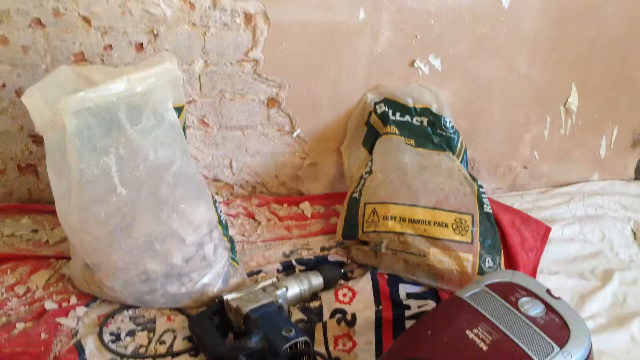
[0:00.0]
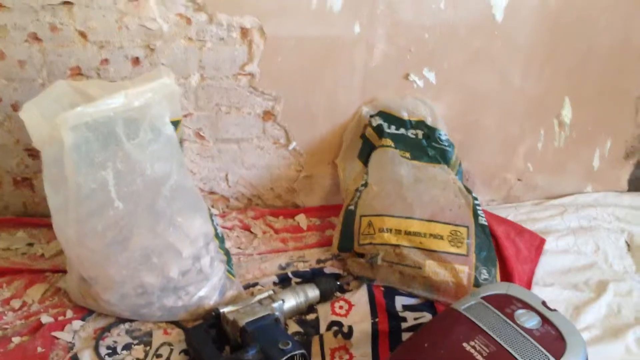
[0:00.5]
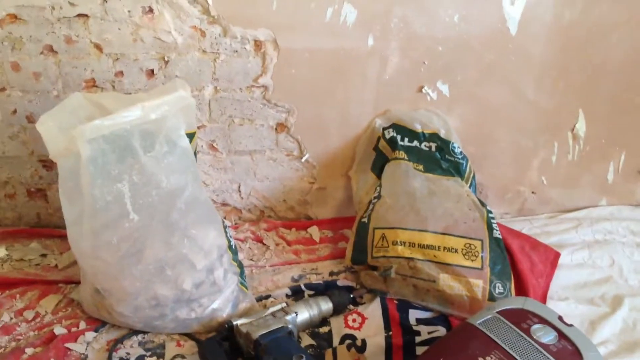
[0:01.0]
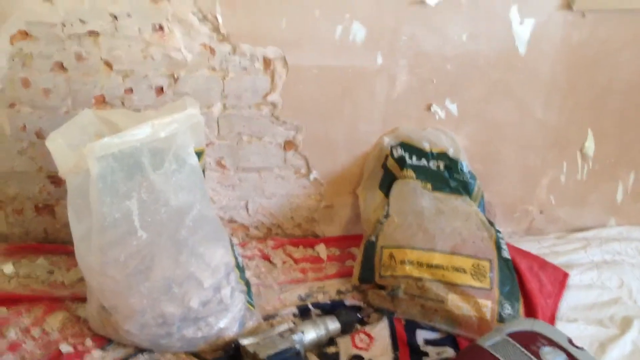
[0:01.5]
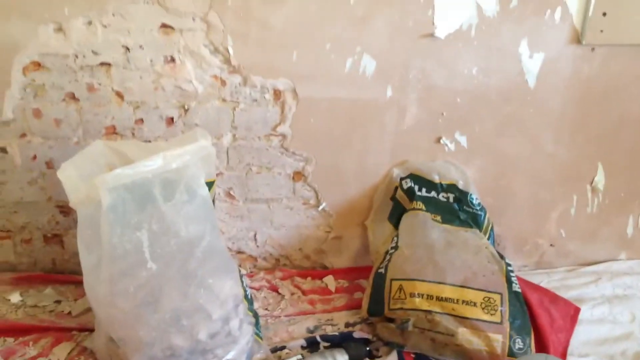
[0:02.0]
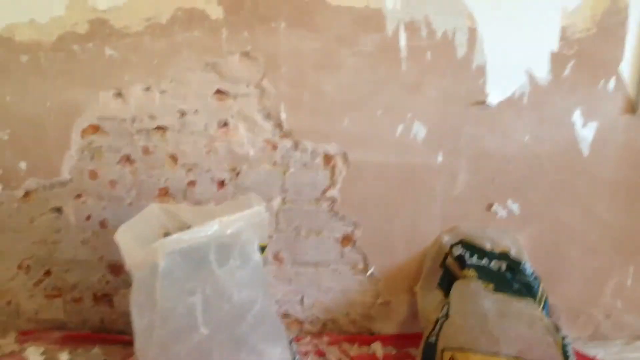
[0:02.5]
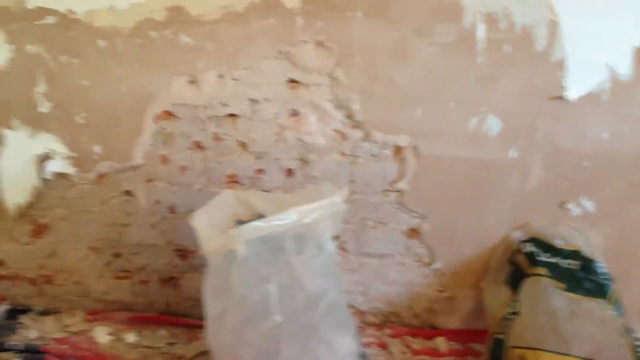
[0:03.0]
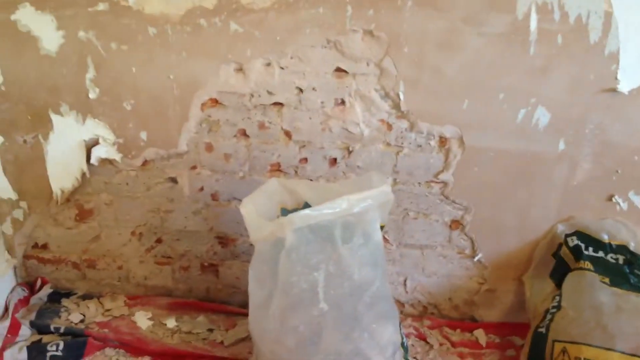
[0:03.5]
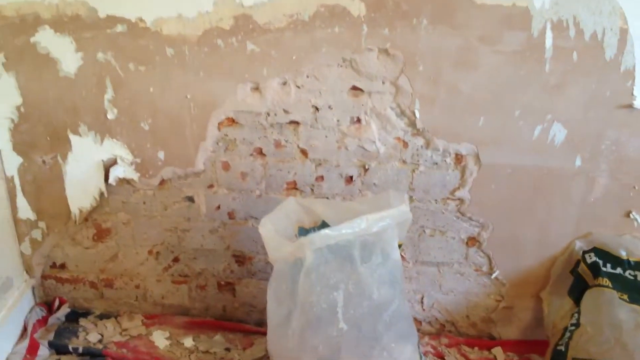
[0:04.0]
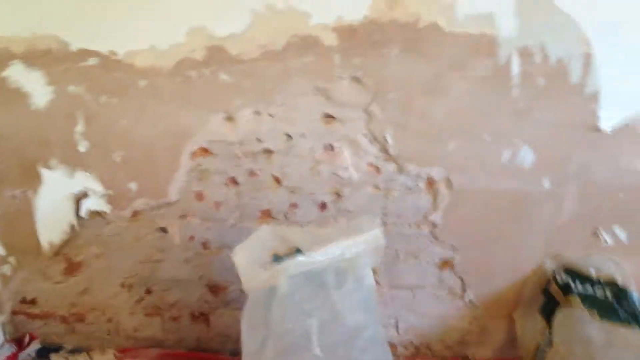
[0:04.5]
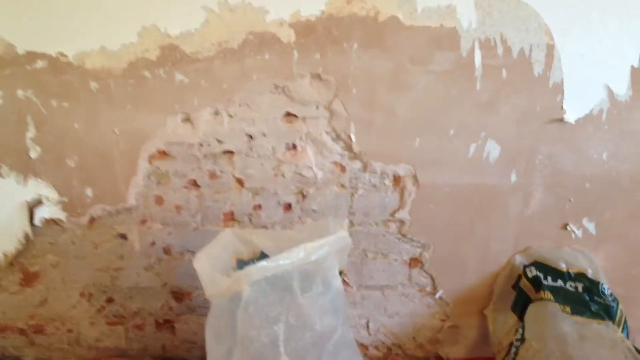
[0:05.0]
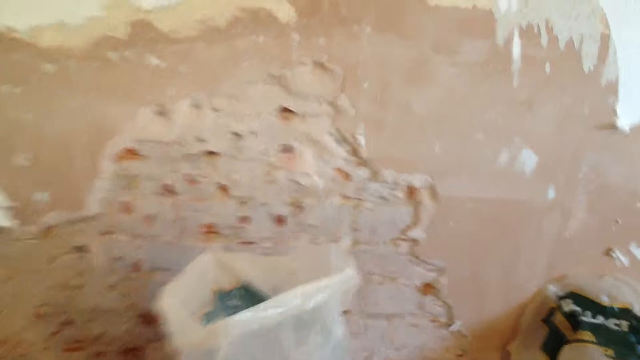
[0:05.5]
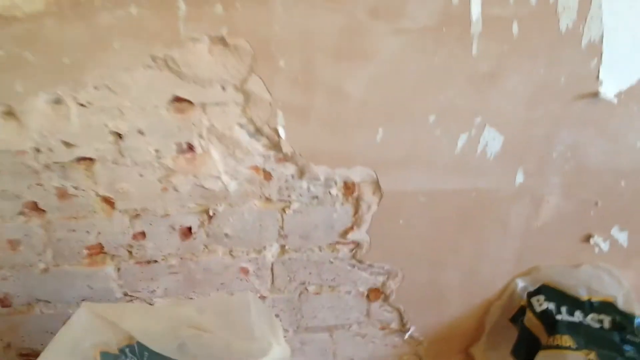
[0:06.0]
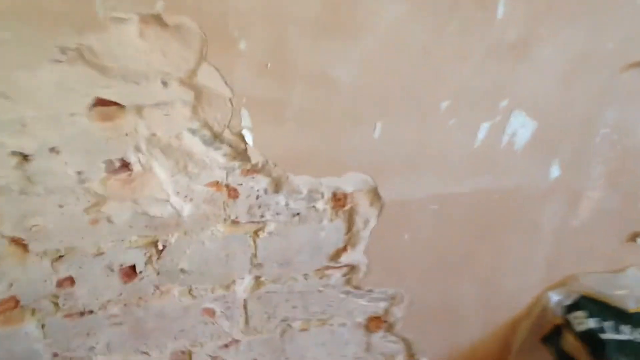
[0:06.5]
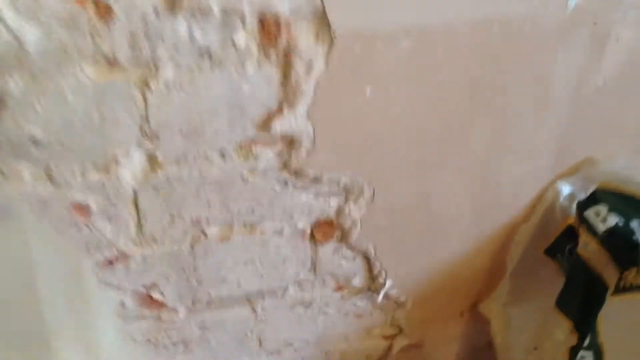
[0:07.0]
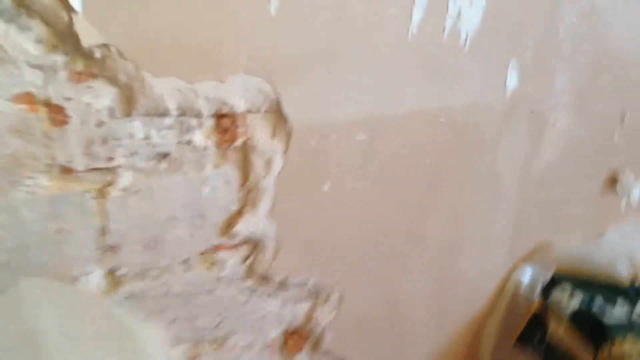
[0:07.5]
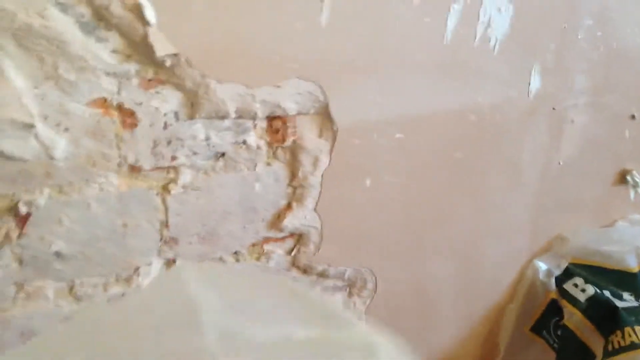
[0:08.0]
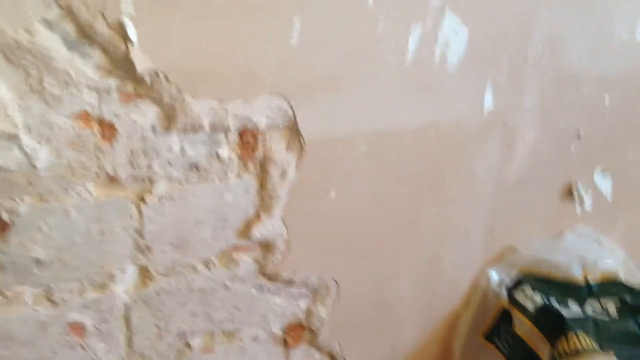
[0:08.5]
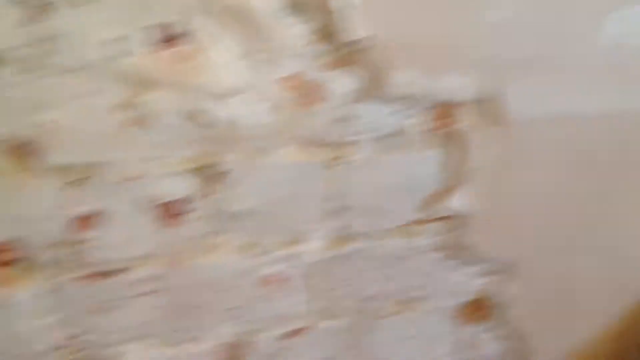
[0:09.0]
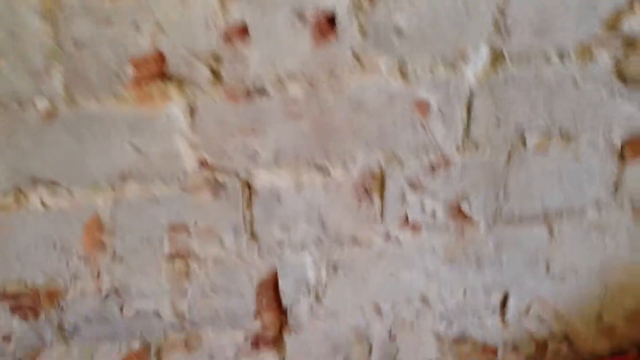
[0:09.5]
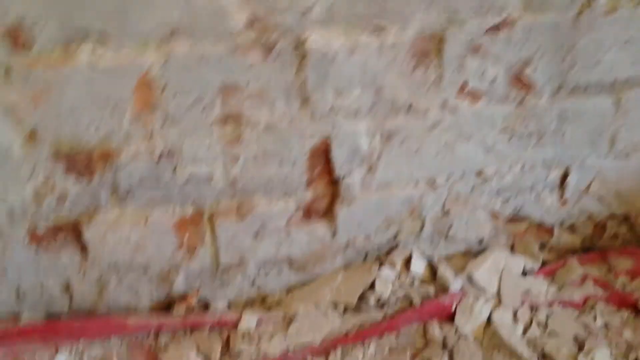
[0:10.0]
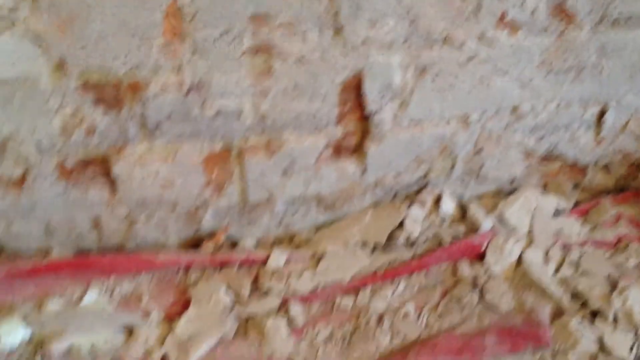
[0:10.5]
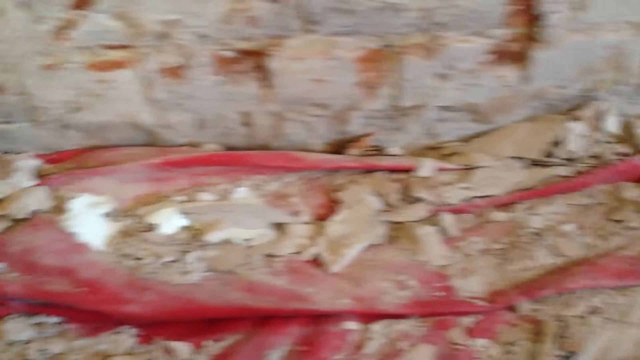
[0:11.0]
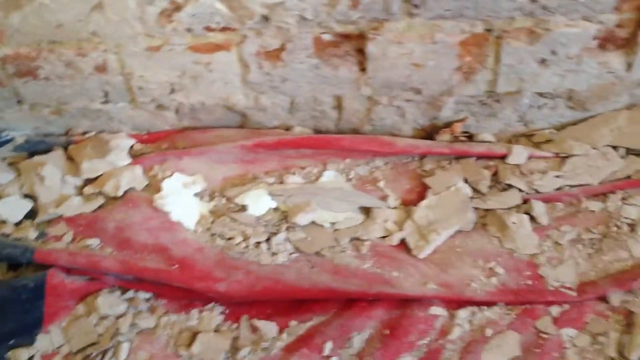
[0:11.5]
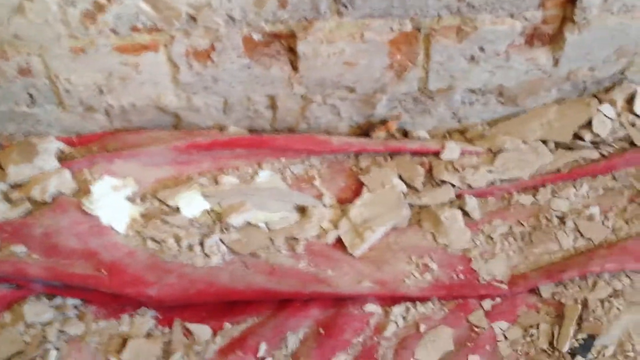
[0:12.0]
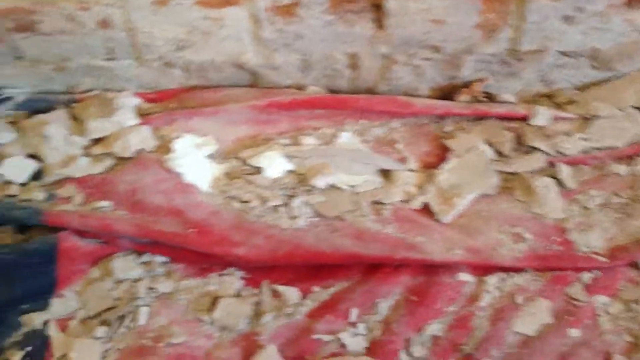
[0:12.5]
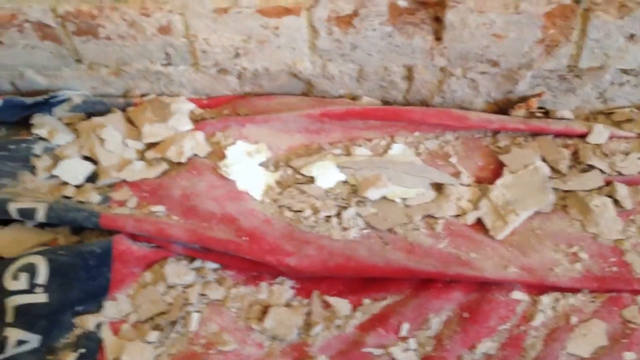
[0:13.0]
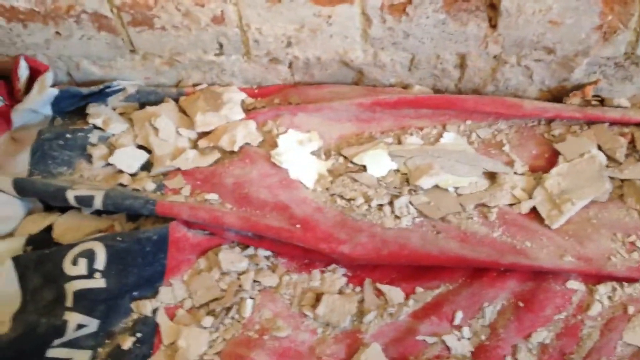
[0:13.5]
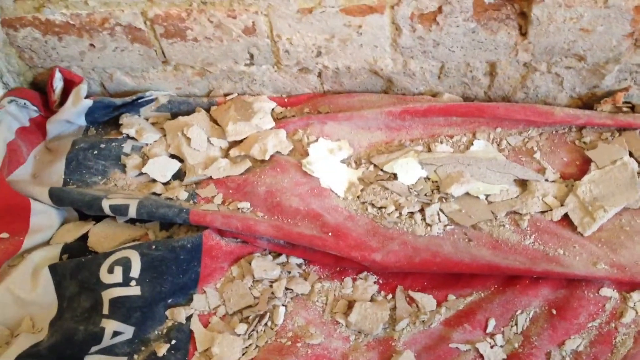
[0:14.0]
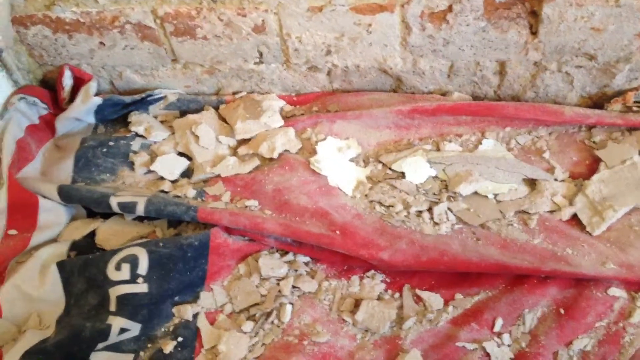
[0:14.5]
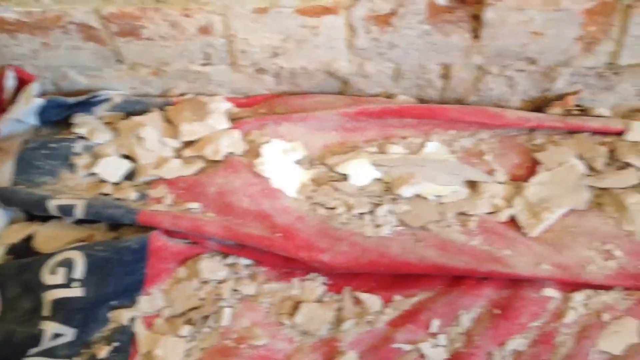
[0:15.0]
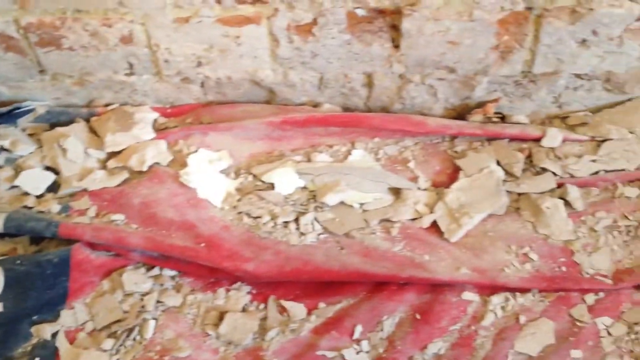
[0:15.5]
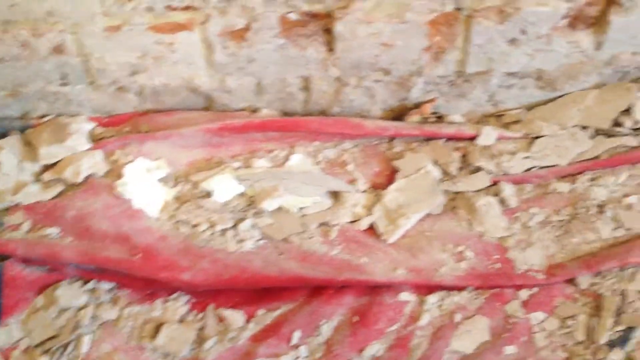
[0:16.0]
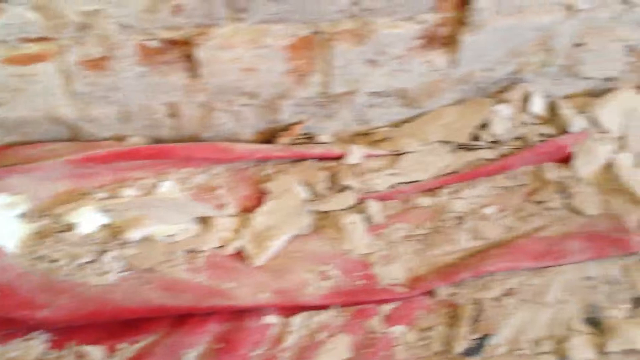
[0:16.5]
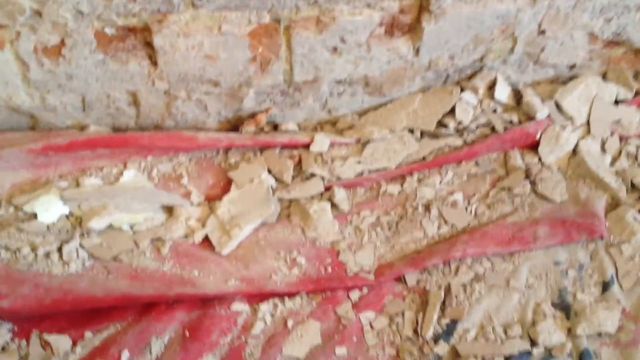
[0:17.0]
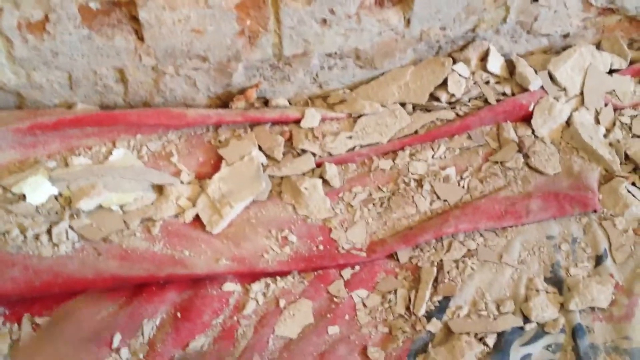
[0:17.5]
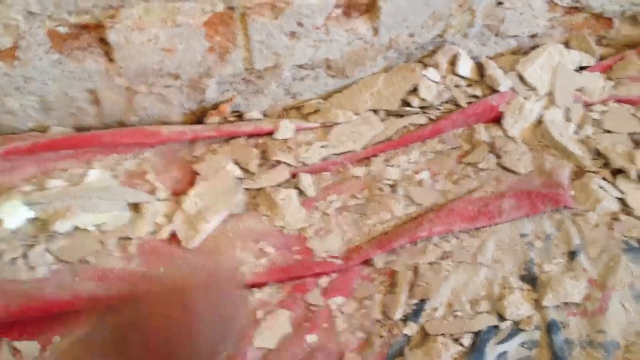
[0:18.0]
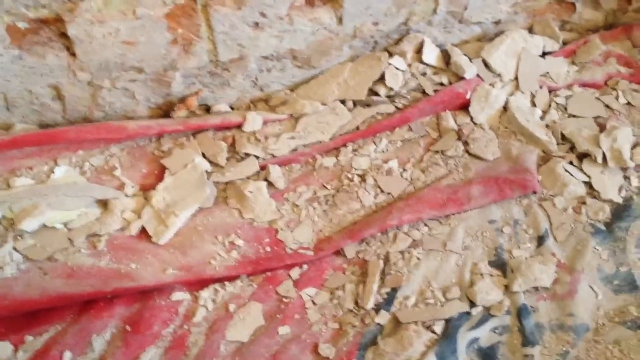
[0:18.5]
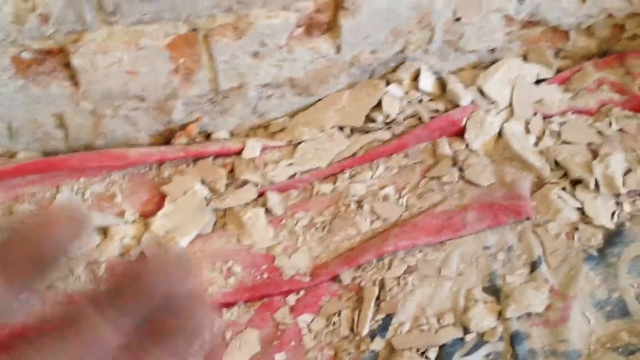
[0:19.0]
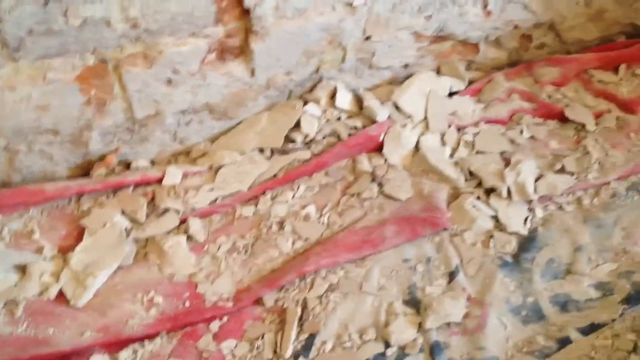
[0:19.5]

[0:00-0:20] Apparently a bathroom renovation of some sort is shown. The handheld video starts near the bottom of the frame before panning up and lifting, moving closer to a wall that has been ripped up, showing the exposed brick behind it. Flakes of the wall are littered all over the ground, along with a red fabric laid across the ground. Plaster, chunks of drywall and molding are everywhere, and a large white bag is visible, as well as a green clear bag filled with a sand-colored powder. These appear to be materials required for a bathroom renovation of some sort. The footage looks to be an amateur production, with a little shakiness as the camera rises upward, tilting before lifting and adjusting to the lighting; the camera physically moves toward the wall rather than using digital or optical zoom, changing the frame by being moved.